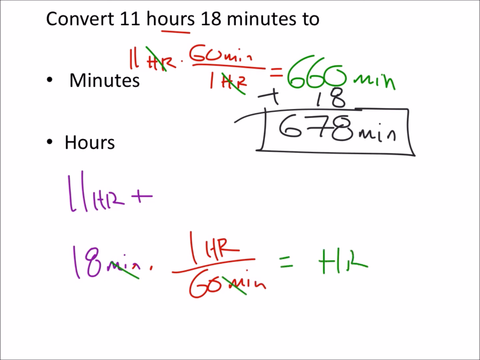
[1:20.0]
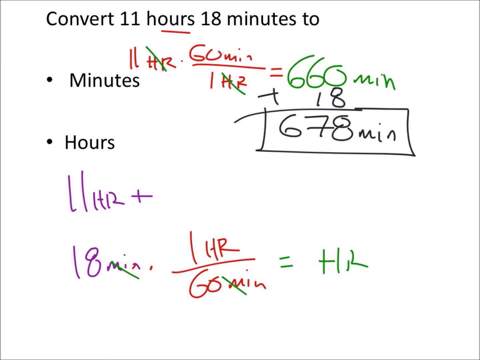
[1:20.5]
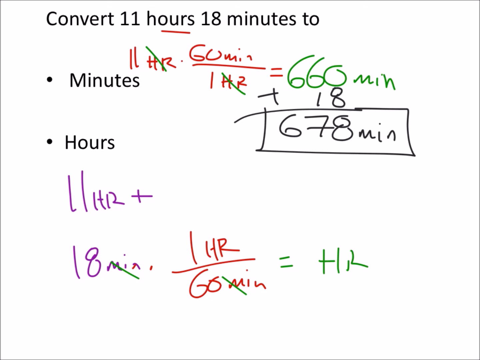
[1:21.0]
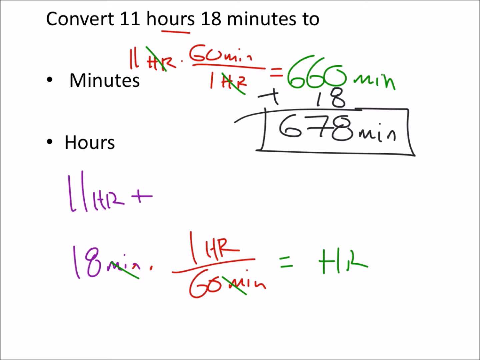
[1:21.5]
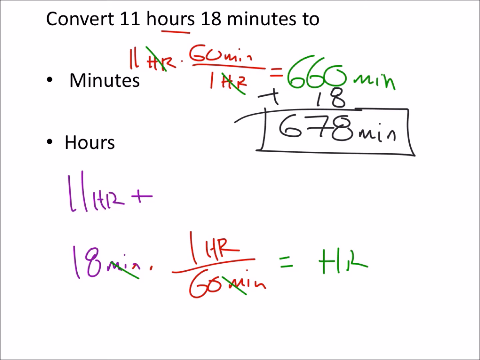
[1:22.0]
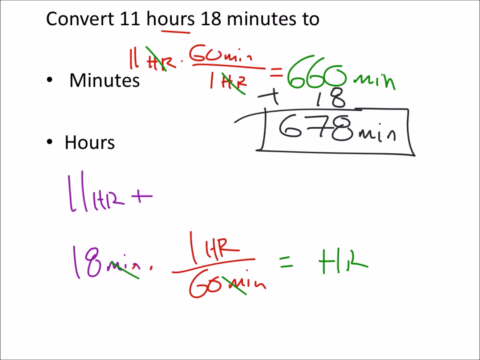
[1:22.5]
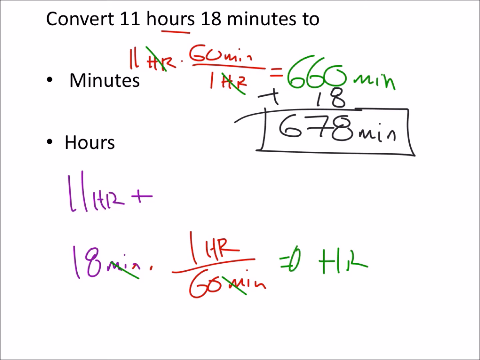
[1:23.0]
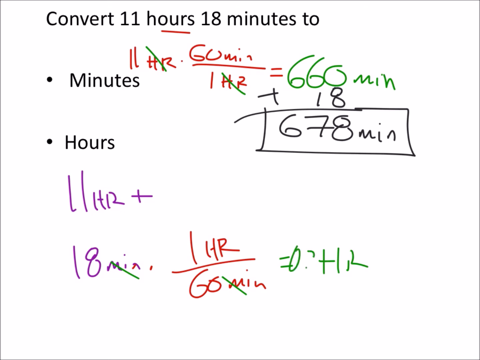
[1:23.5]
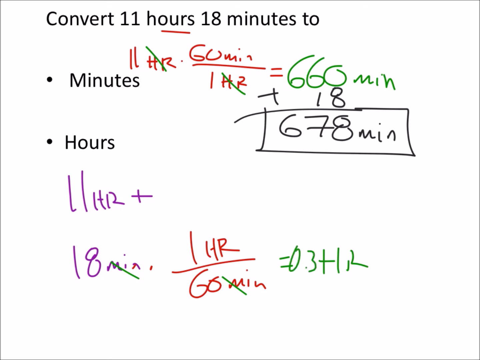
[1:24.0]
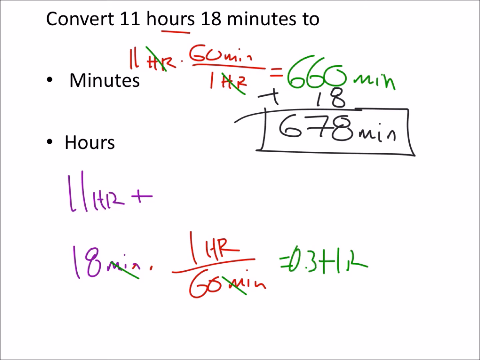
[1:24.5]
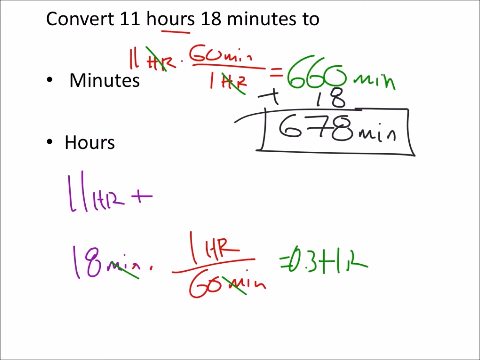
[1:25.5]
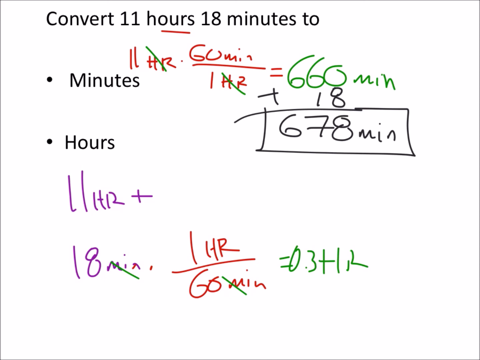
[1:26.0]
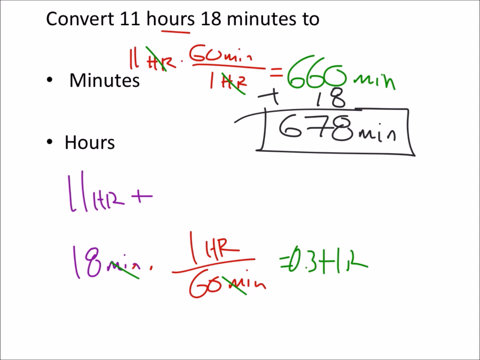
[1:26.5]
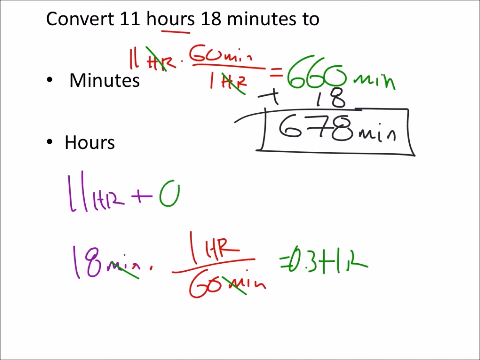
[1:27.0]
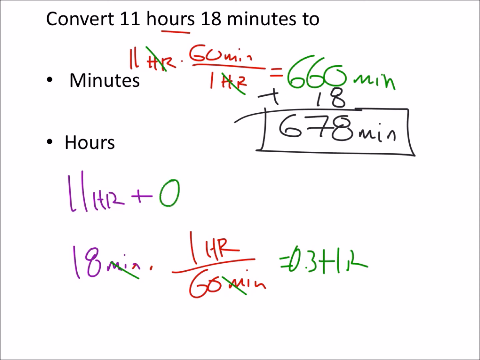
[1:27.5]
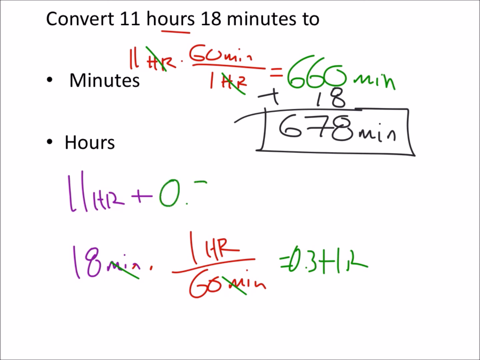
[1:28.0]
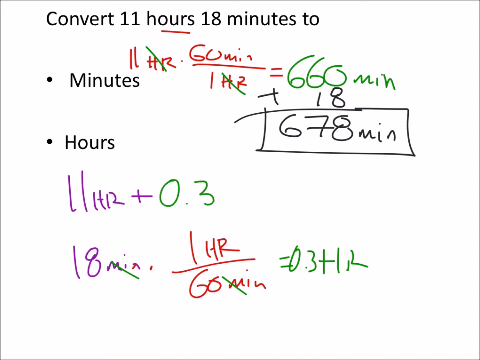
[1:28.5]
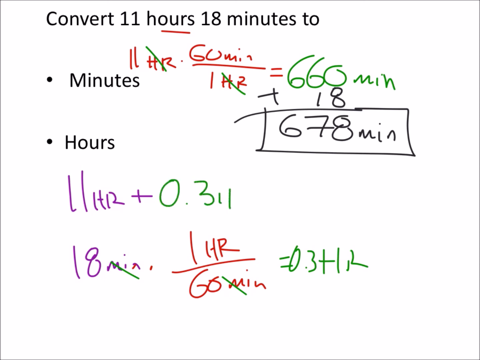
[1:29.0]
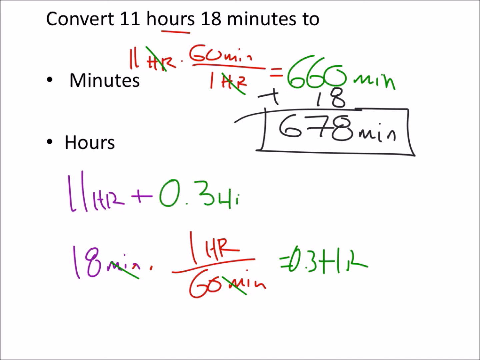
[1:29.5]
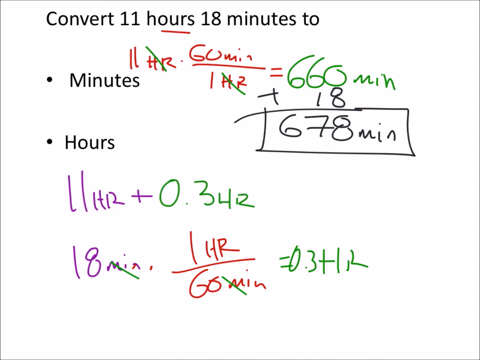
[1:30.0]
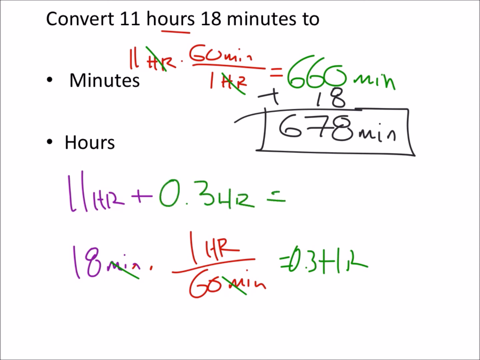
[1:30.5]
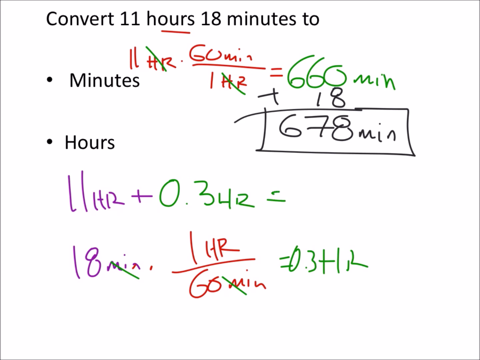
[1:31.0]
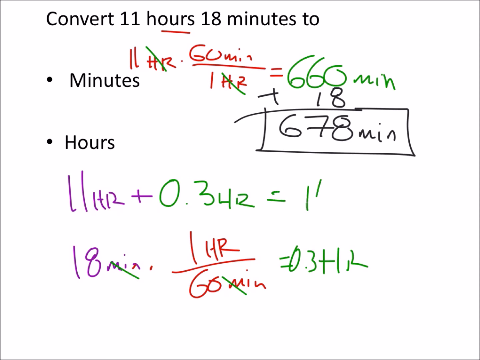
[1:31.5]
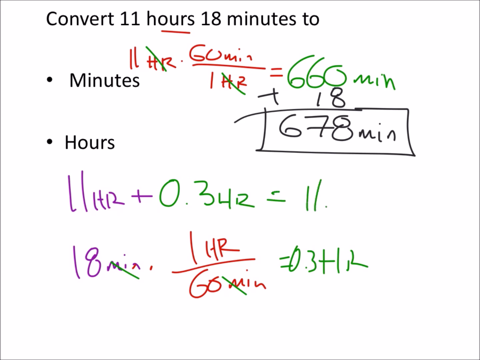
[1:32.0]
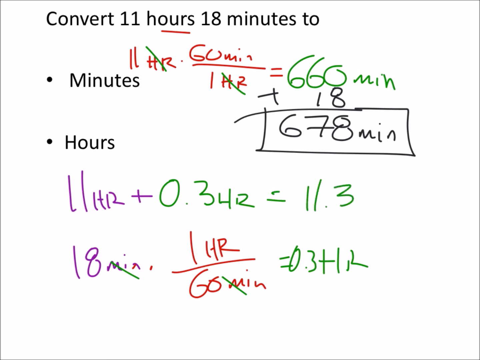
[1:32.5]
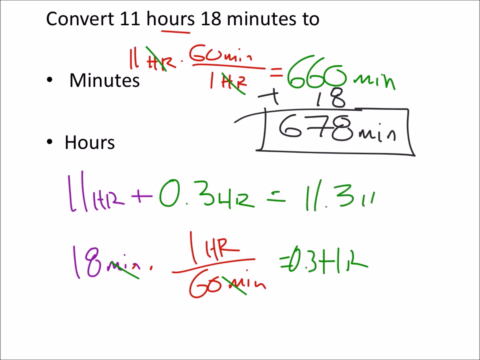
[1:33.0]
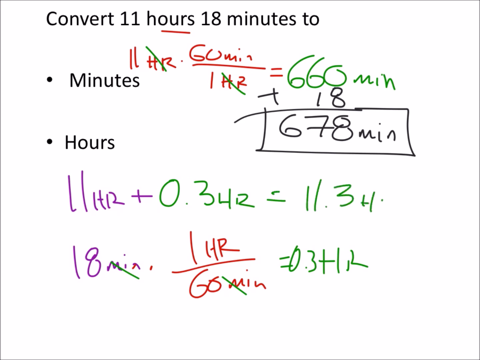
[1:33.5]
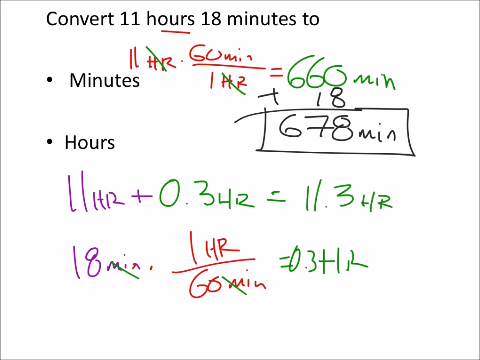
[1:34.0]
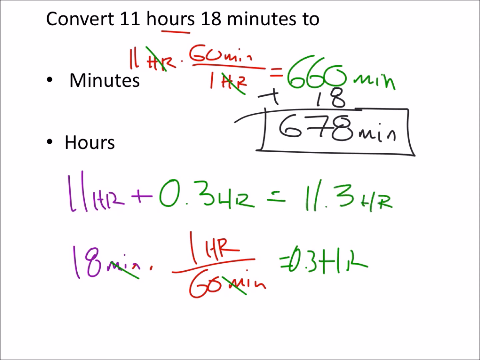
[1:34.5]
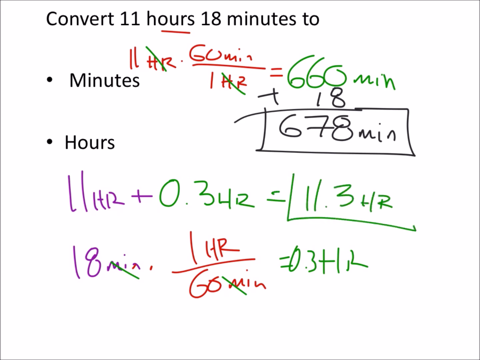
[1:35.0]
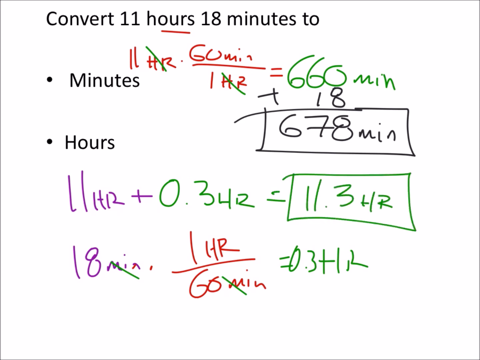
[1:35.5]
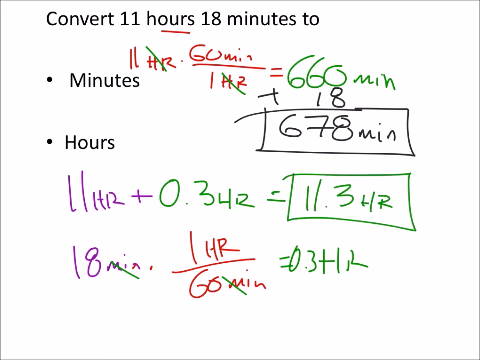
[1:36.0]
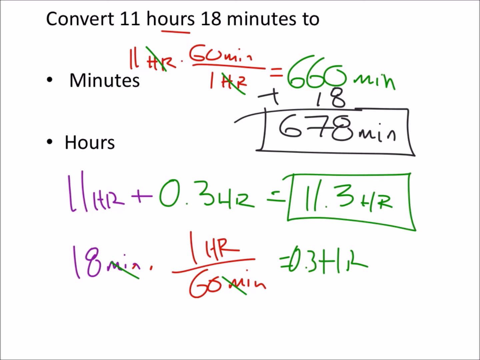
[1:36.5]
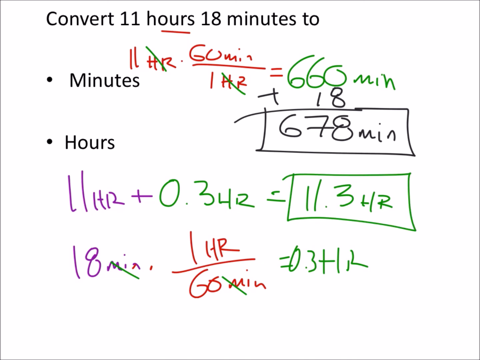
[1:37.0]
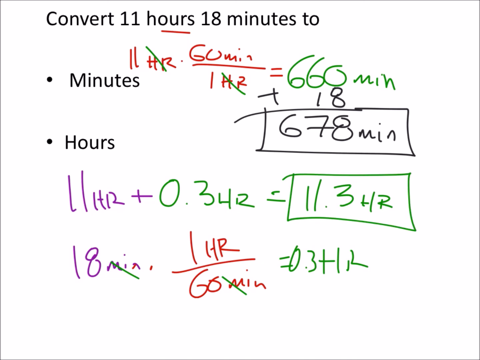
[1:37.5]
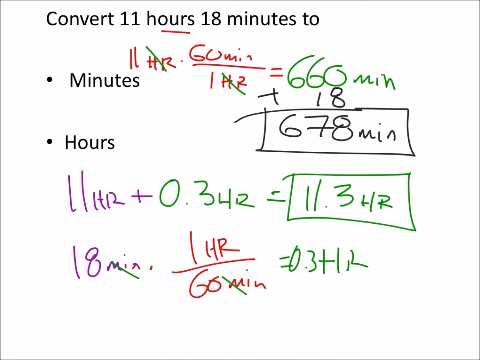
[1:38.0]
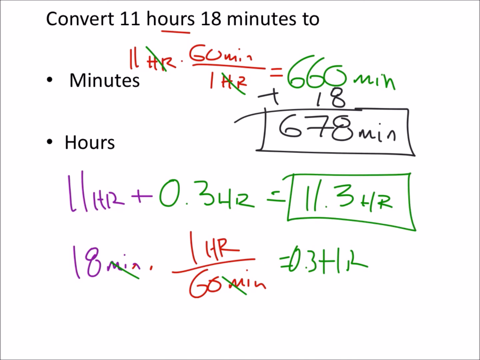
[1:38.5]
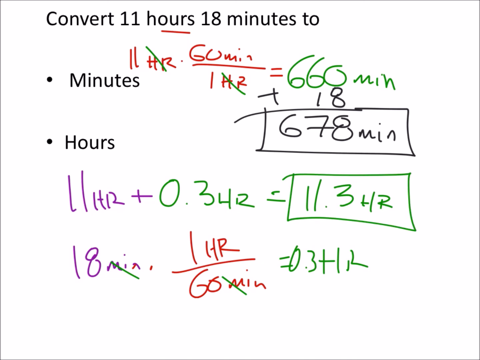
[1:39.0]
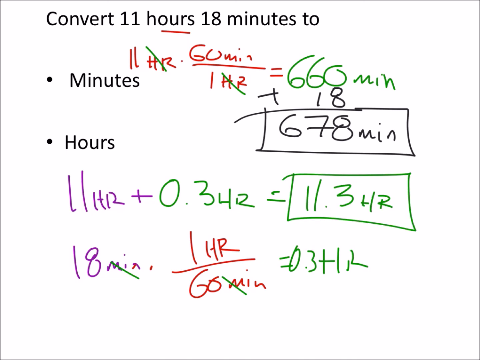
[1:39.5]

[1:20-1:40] A math problem reads "convert 11 hours, 18 minutes to", with two bullet points underneath, the first saying "minutes" and the second "hours". Next to the minutes bullet point, an equation in brown marker reads "11 HR times 60 min over 1 HR equals", followed in green numbers by "660 min", and the "HR" labels are slashed with a green line. Under "660 min", black marker reads "plus 18", with an equal line underneath and then "678 min", which has a box drawn around it. Under the hours bullet point, purple marker reads "11 HR plus", with "18 min" underneath, then brown marker reading "times 1 HR over 60 min", then green marker reading "equals HR". The "min" labels have a green slash through them. Someone writes 0.3 in front of the last "HR" after the equal sign. They then go up a line and, next to the purple text "11 HR plus", write "0.3 HR equals 11.3 HR" in green marker, then draw a square around this answer.